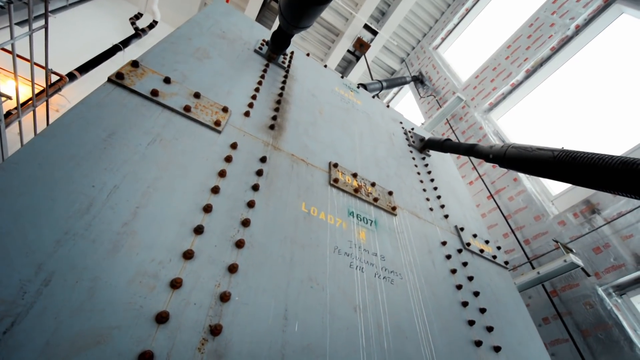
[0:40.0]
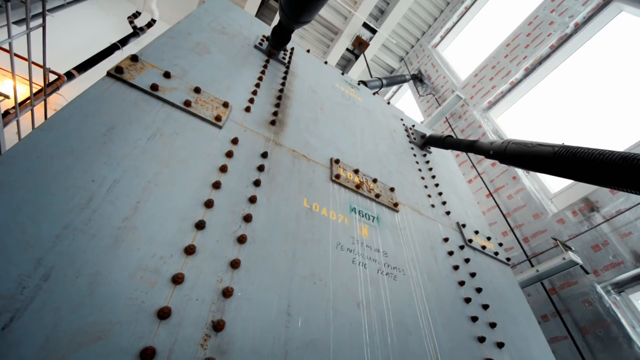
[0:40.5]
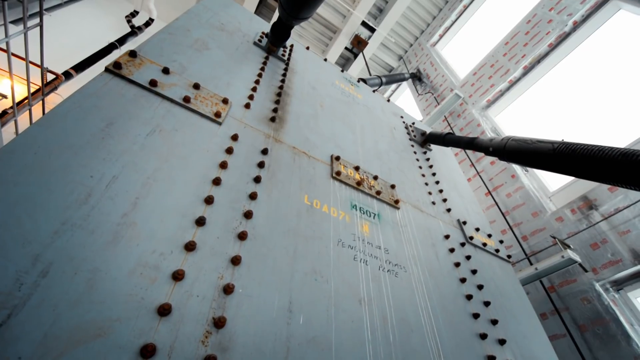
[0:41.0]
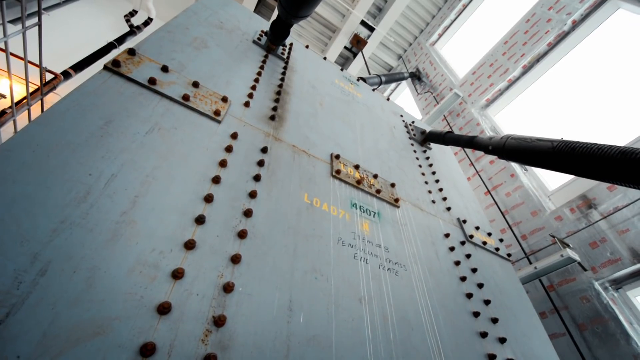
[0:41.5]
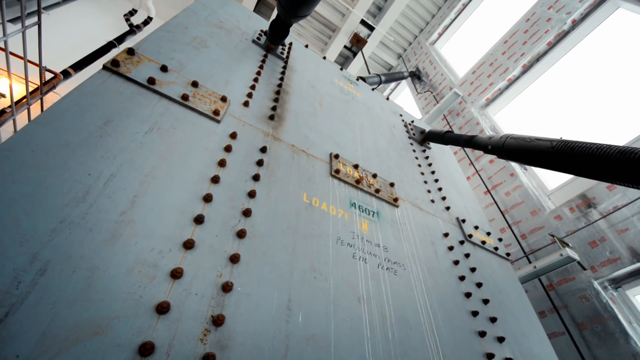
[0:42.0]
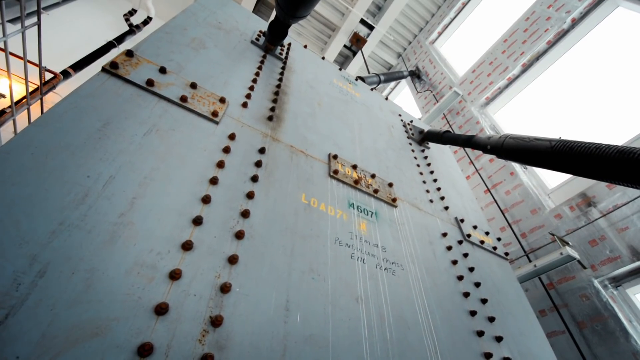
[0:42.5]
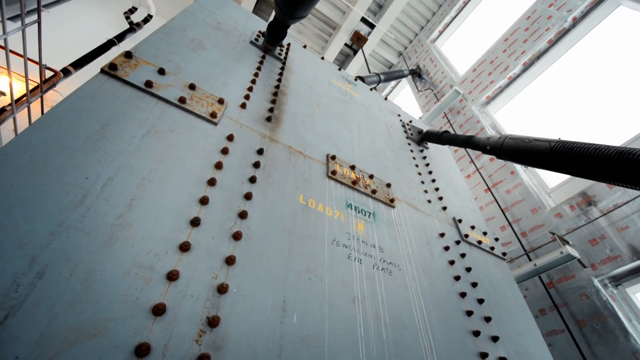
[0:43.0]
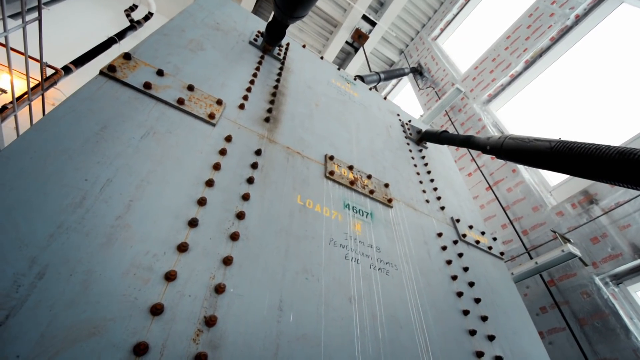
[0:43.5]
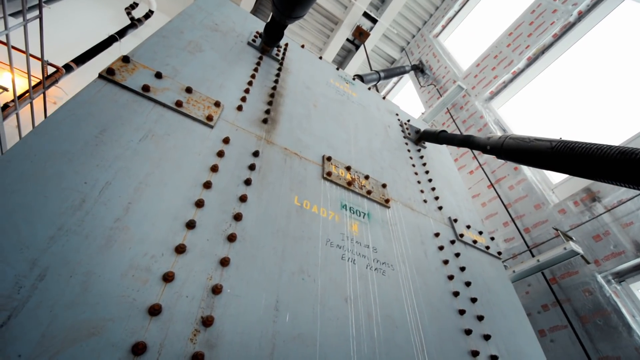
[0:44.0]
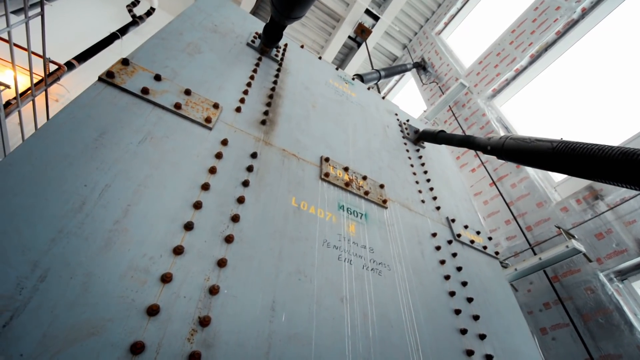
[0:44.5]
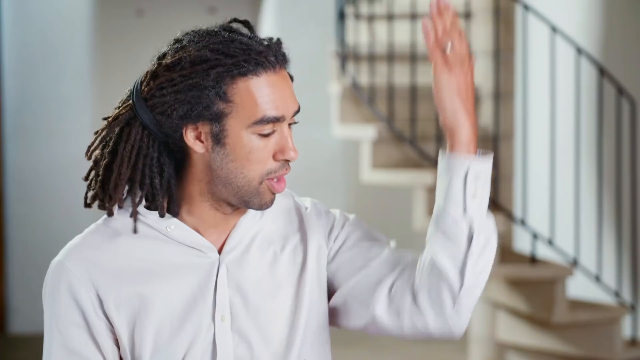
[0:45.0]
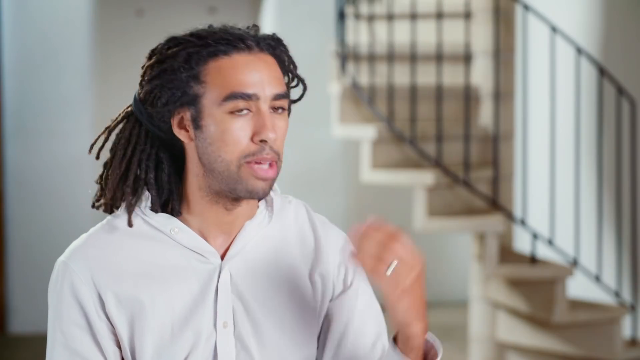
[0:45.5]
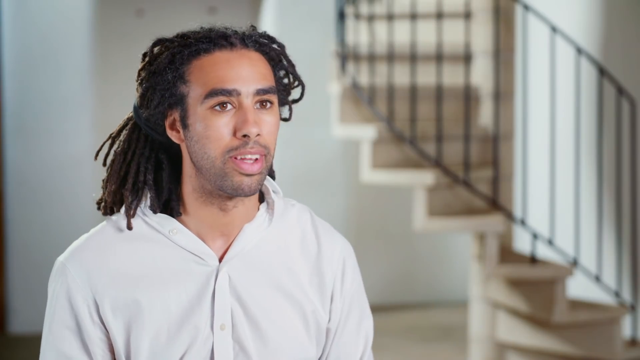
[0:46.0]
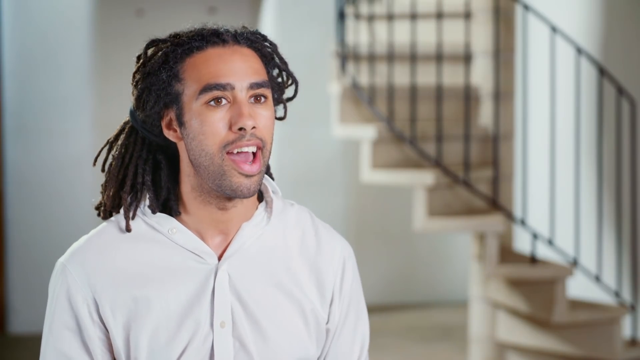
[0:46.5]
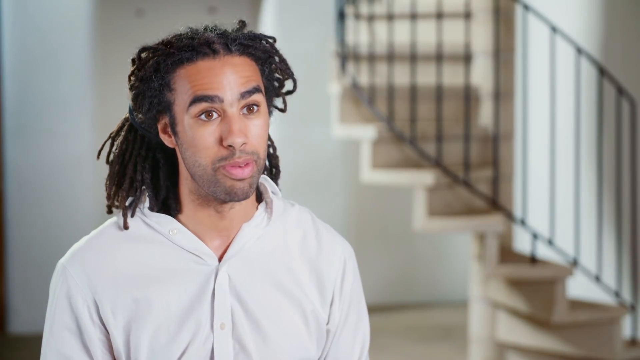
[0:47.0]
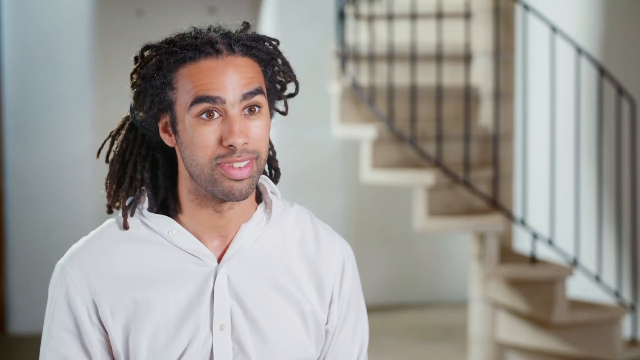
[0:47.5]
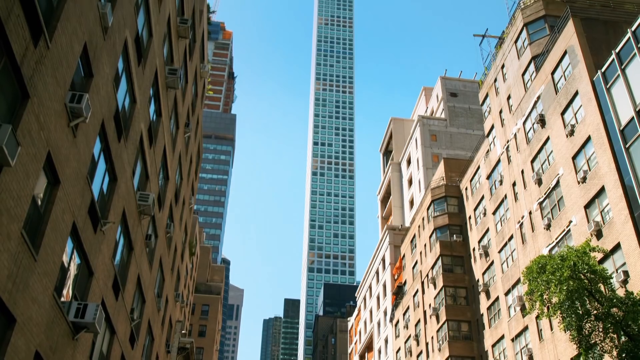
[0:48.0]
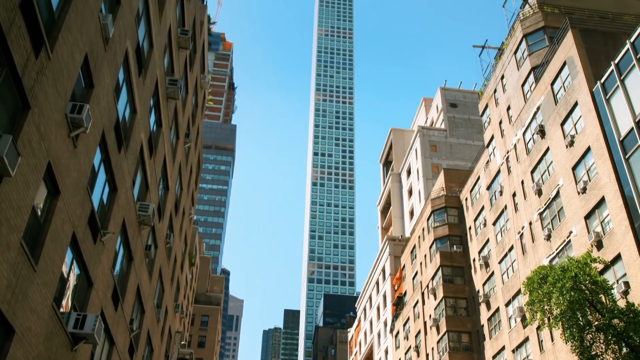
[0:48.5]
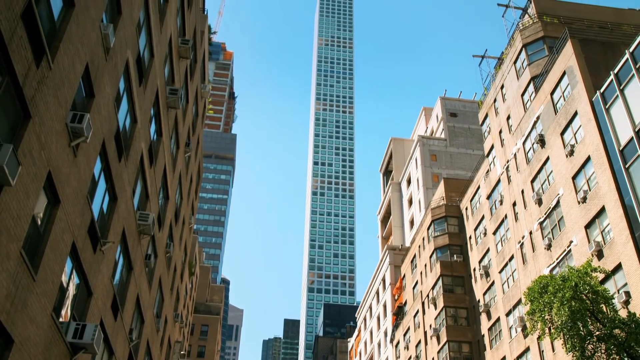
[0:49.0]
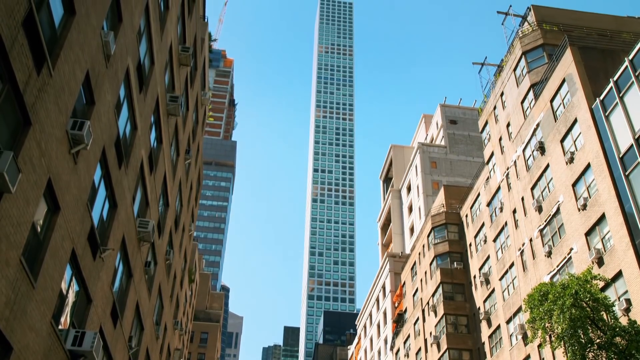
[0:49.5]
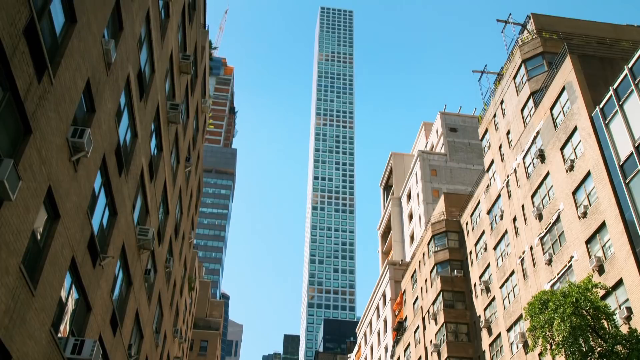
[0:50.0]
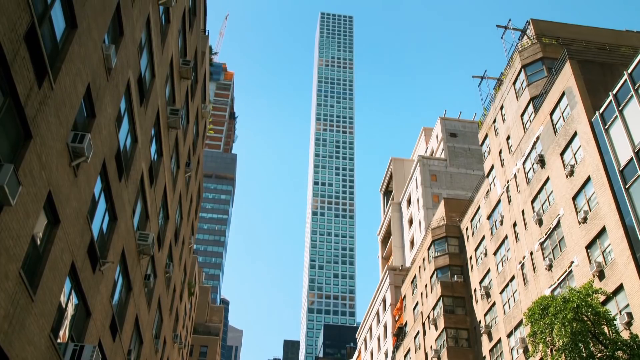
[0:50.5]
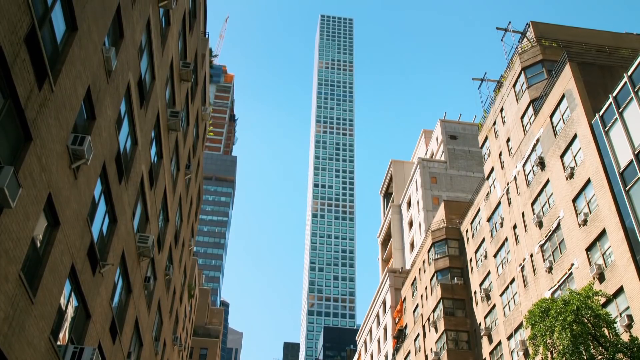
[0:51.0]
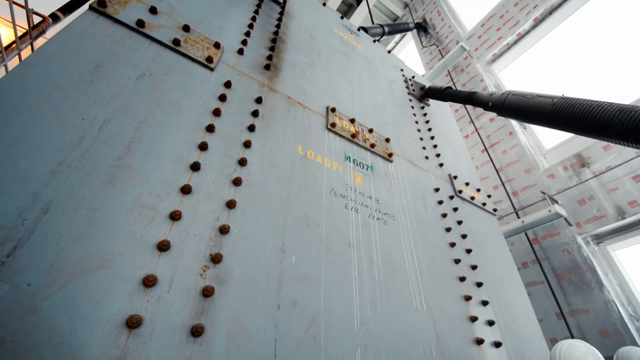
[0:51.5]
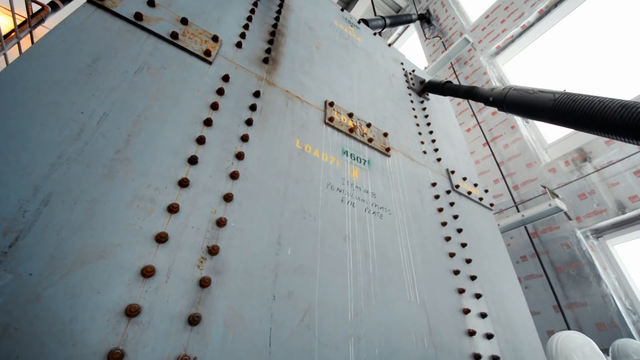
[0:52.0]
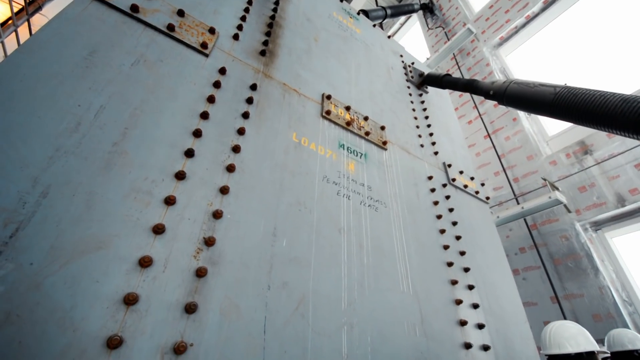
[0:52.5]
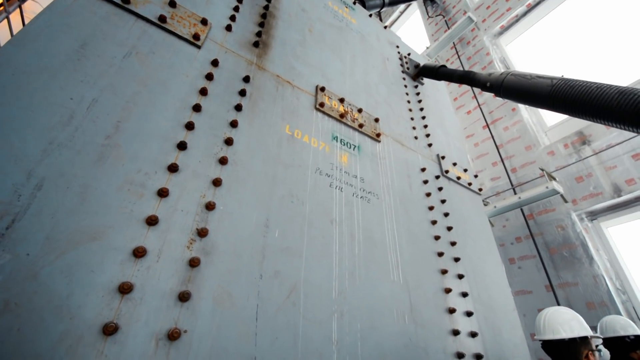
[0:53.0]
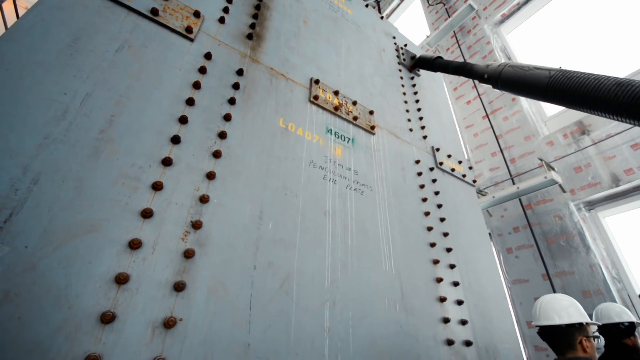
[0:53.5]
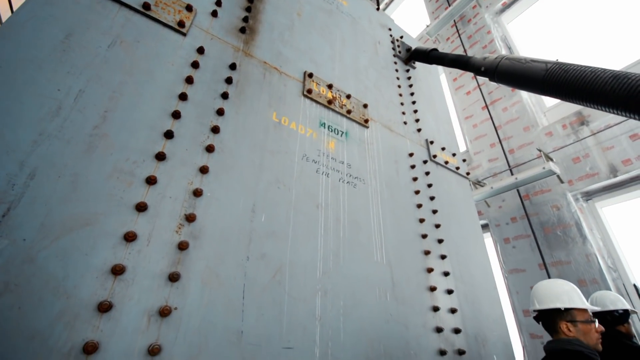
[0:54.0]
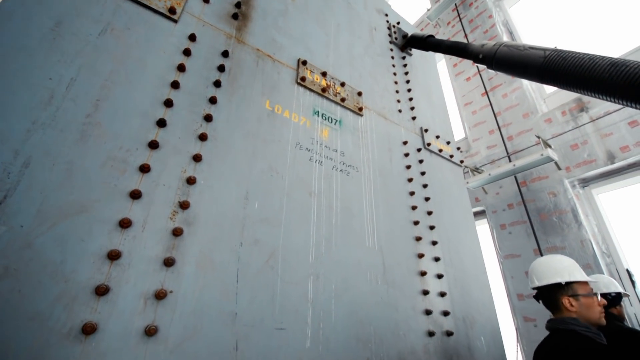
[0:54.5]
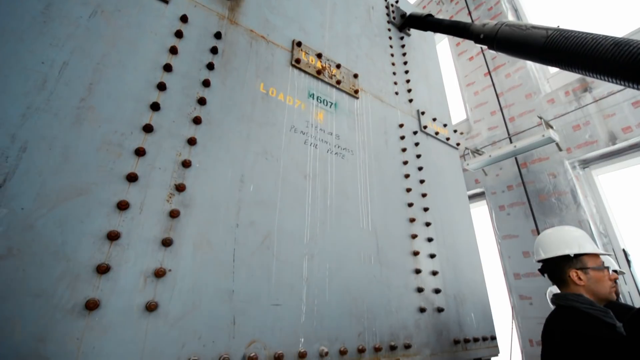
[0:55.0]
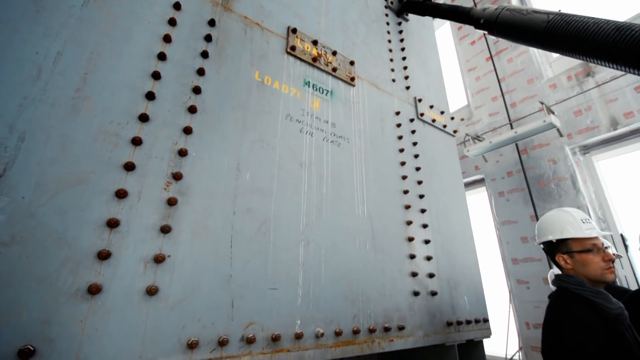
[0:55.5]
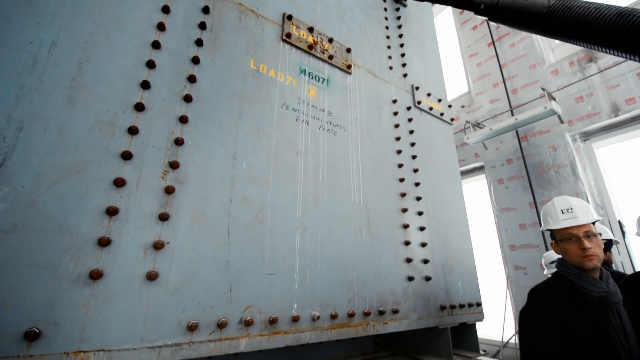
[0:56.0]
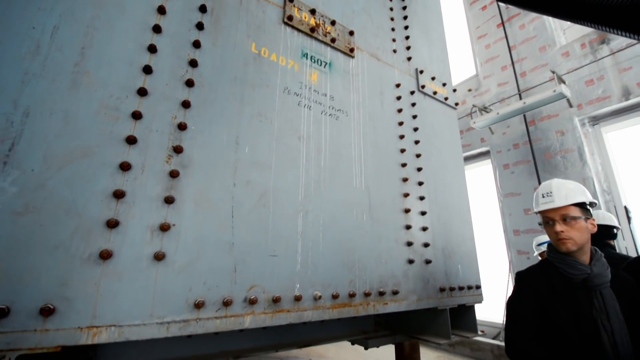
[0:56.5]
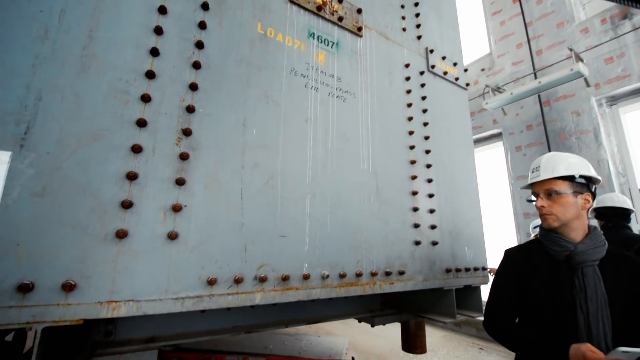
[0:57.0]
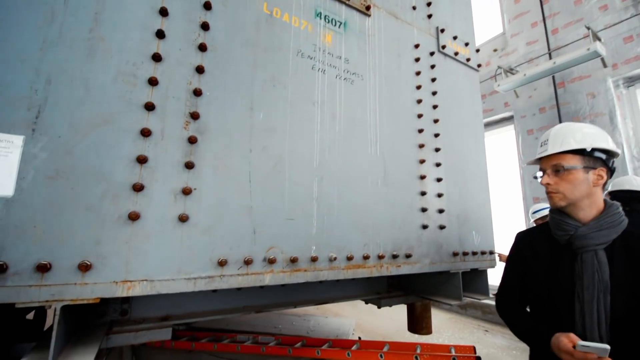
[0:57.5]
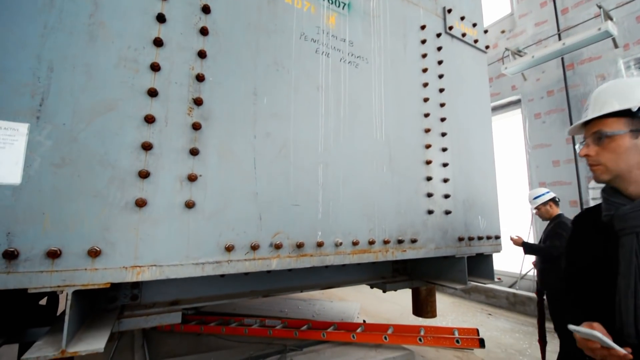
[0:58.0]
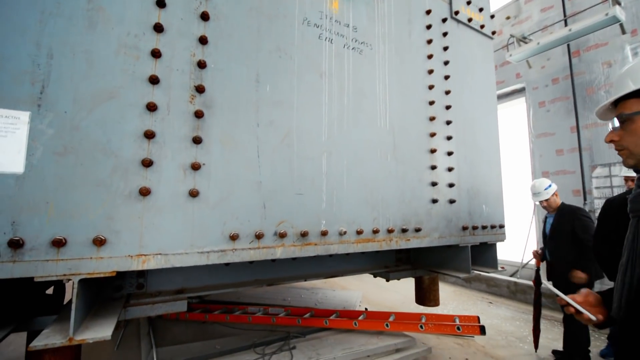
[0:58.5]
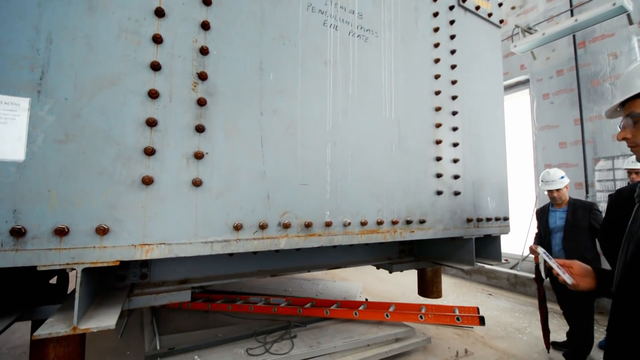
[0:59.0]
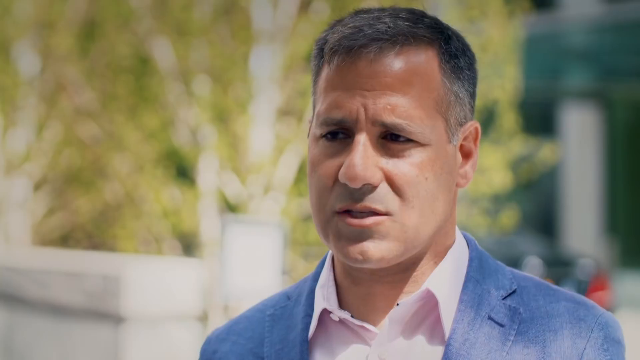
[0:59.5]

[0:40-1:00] A very large piece of metal, possibly something used to build a building, has many rivets and bolts in it. It looks like it is being held up by strong metal arms, perhaps moving it into place, and it moves slowly. The scene switches to a man sitting down, possibly inside a home, with a curved stairway behind him. He is possibly in his 20s or 30s, African-American, with shoulder-length hair in dreadlocks pulled back into a wide ponytail. The camera then pans up a very tall skyscraper, seen possibly from street level, with lower buildings on both the right and the left. The moving piece of metal is shown again, now with what are possibly engineers or workers in the lower right-hand corner: apparently two of them, both in white hard hats, one wearing glasses, turning to look at the metal.